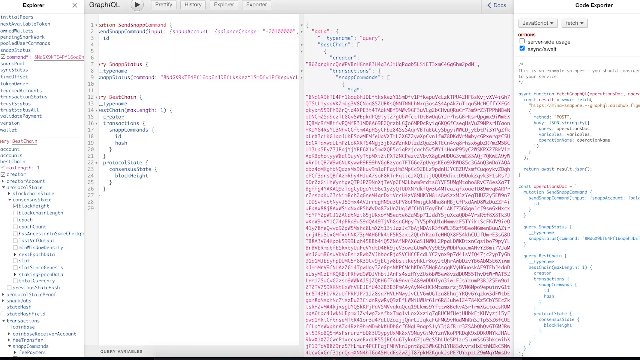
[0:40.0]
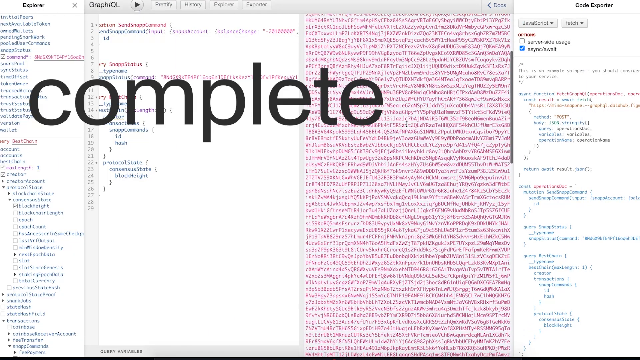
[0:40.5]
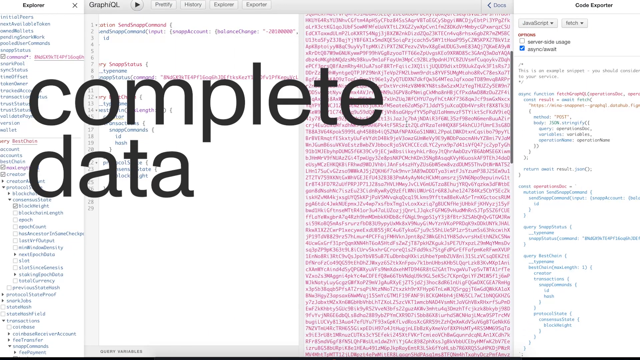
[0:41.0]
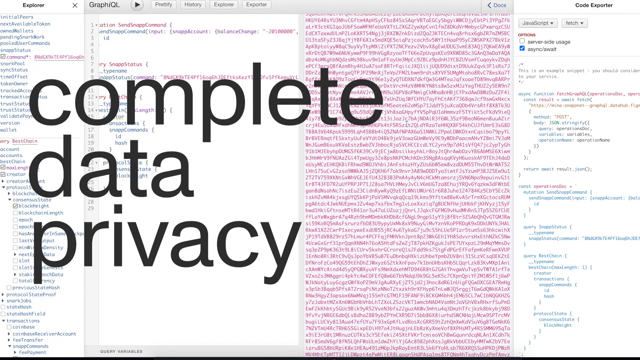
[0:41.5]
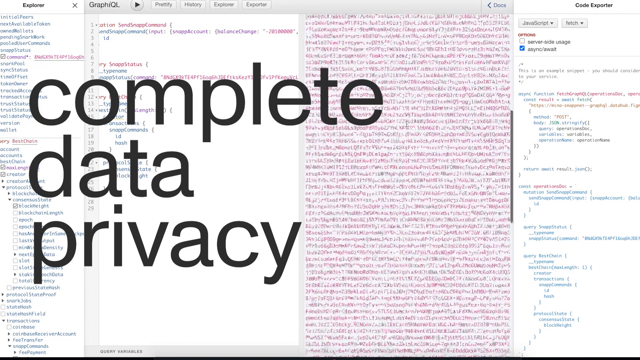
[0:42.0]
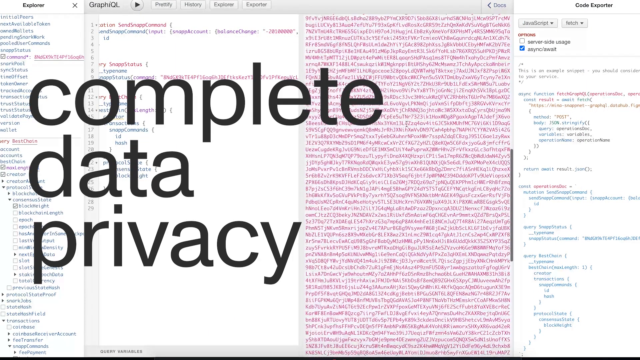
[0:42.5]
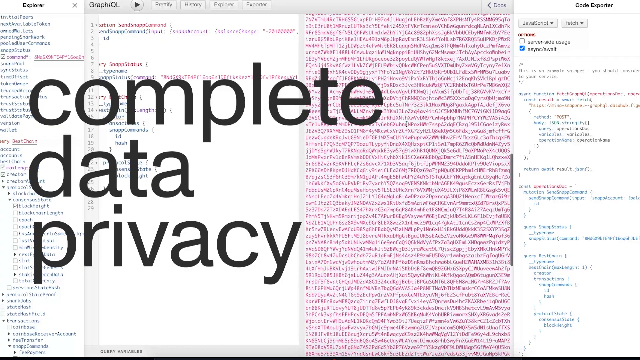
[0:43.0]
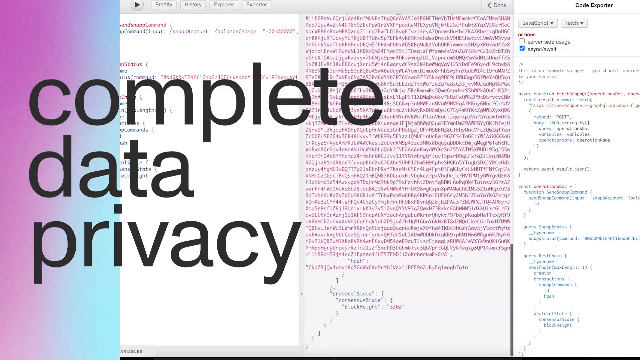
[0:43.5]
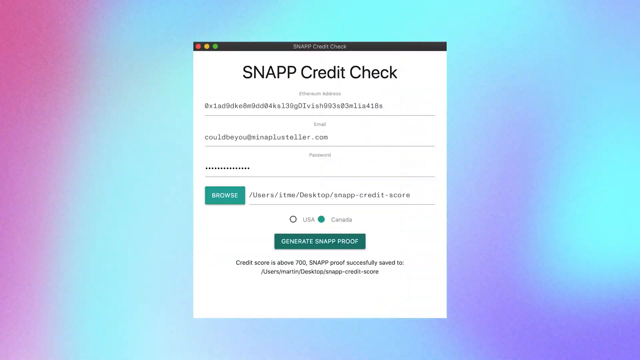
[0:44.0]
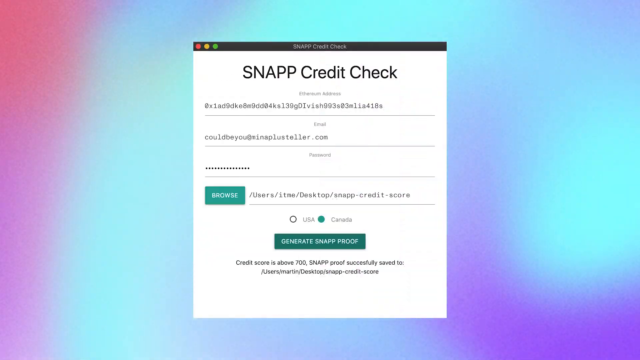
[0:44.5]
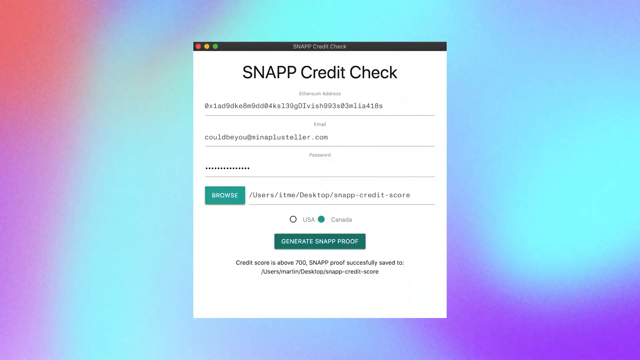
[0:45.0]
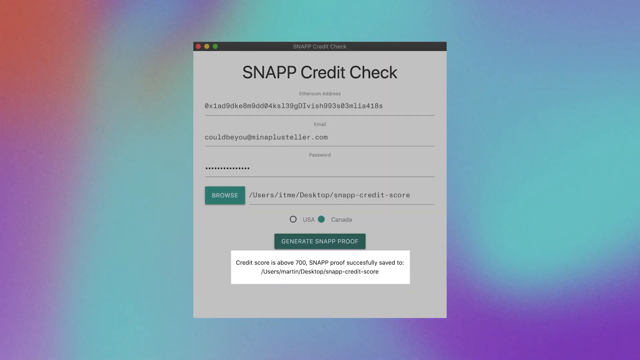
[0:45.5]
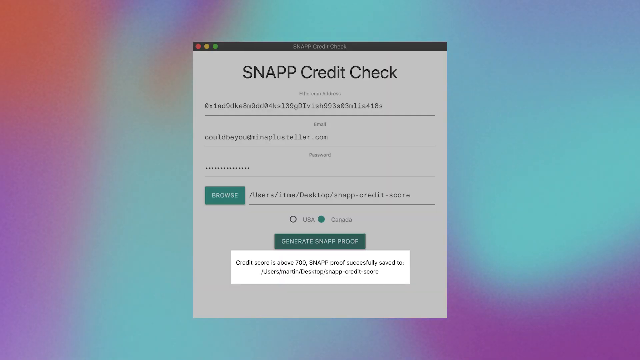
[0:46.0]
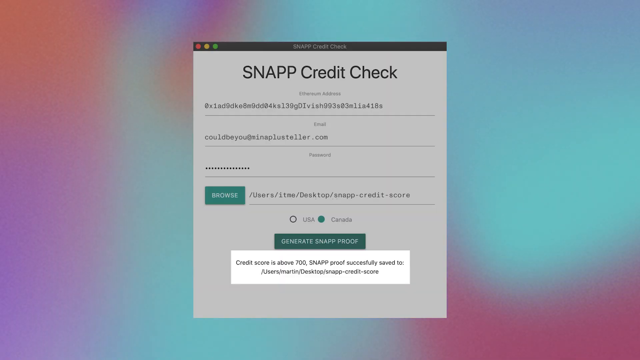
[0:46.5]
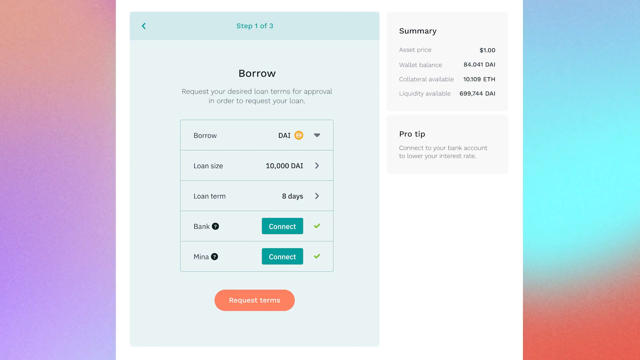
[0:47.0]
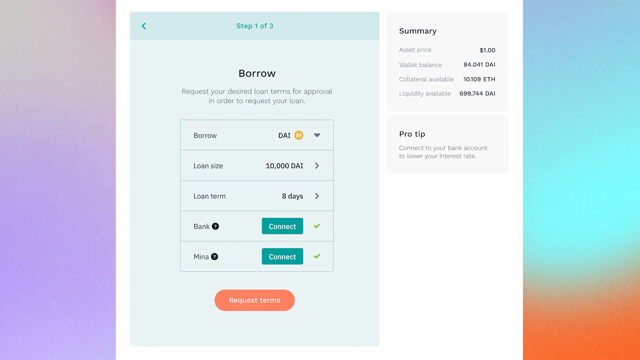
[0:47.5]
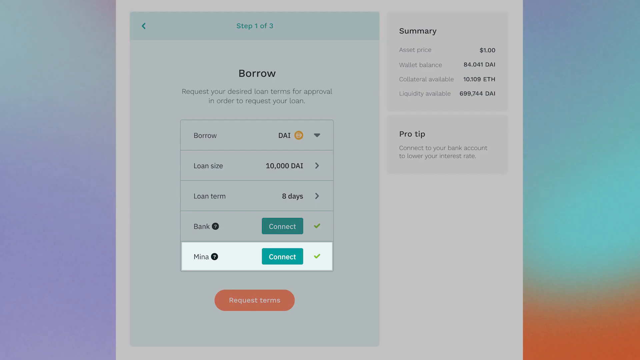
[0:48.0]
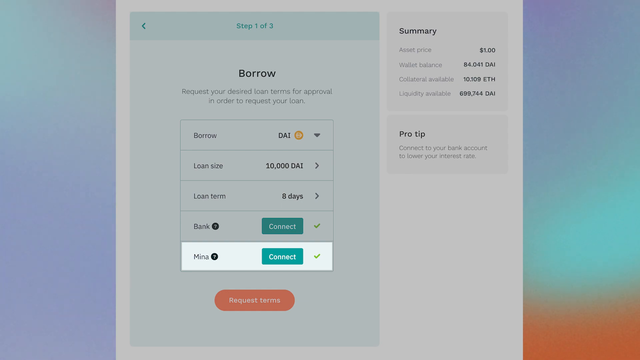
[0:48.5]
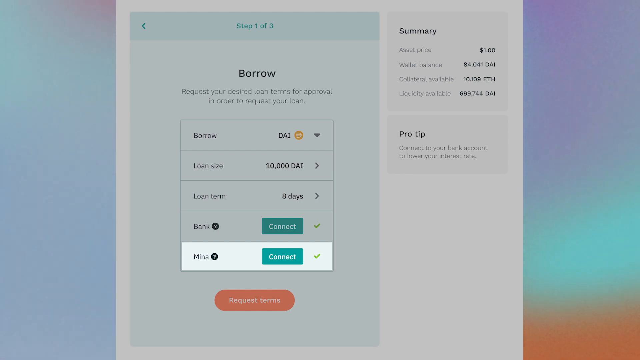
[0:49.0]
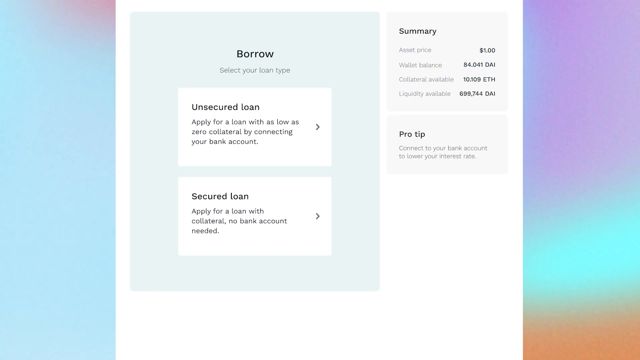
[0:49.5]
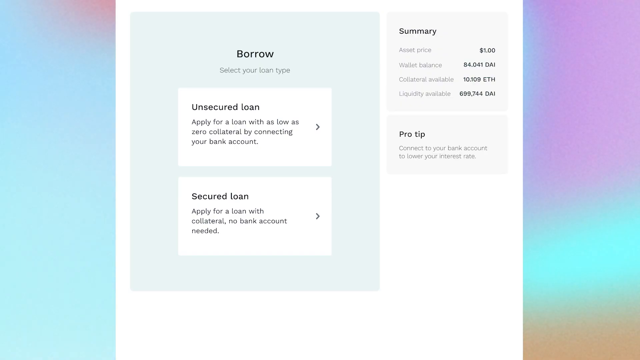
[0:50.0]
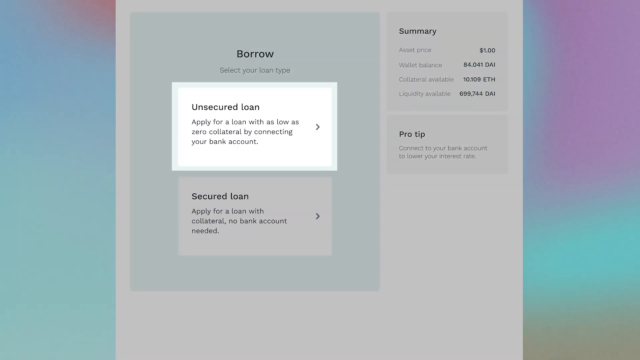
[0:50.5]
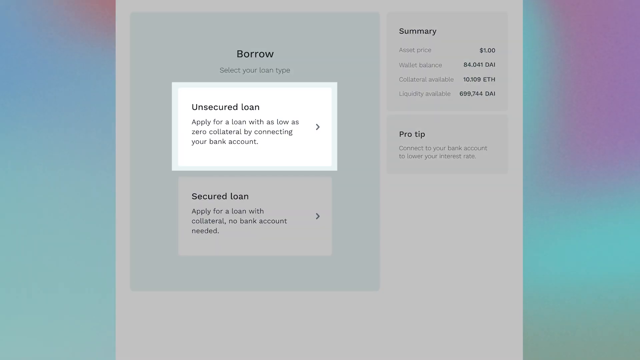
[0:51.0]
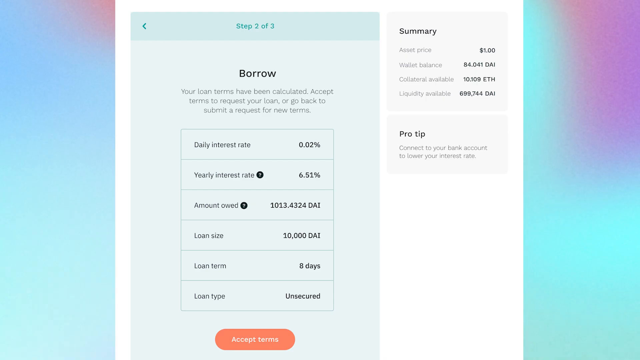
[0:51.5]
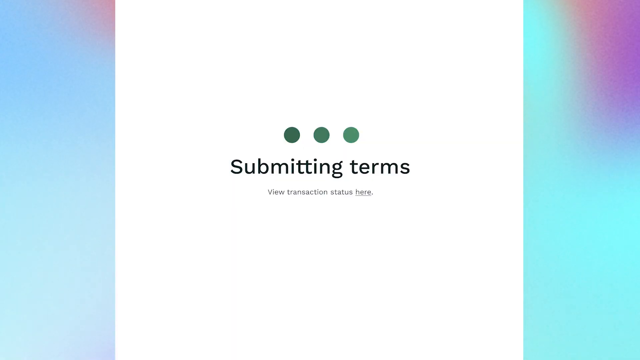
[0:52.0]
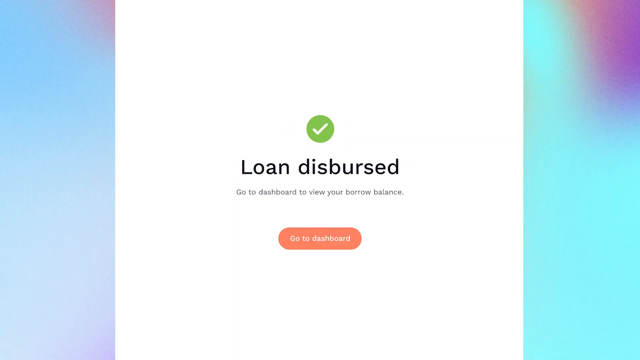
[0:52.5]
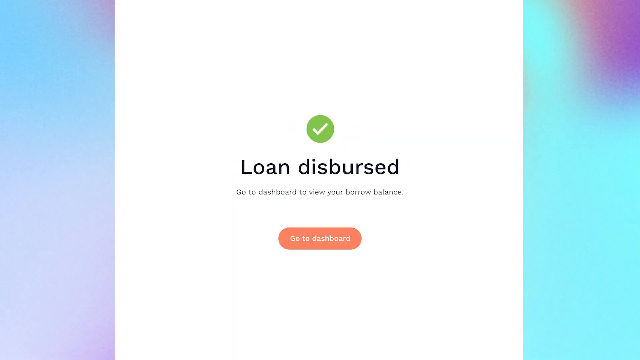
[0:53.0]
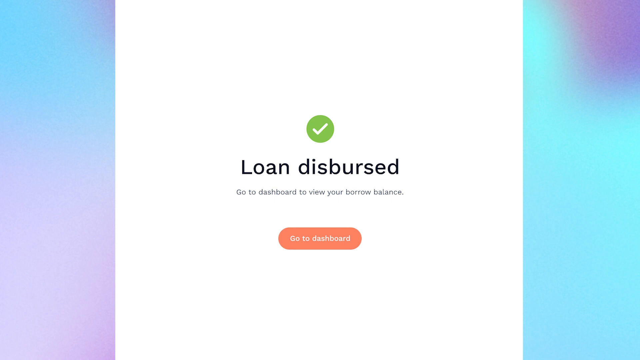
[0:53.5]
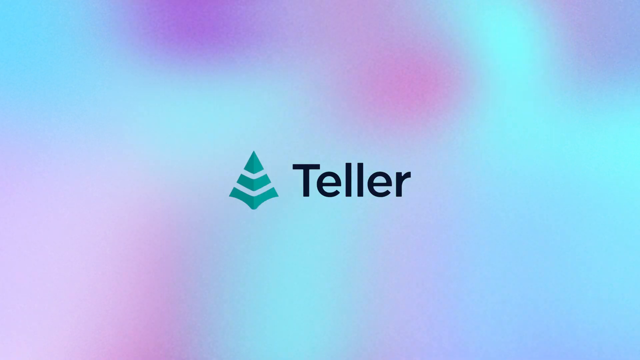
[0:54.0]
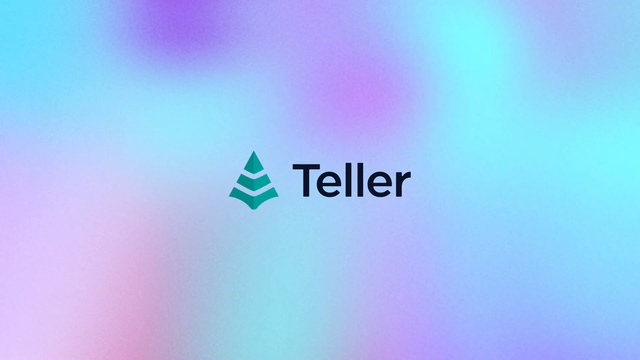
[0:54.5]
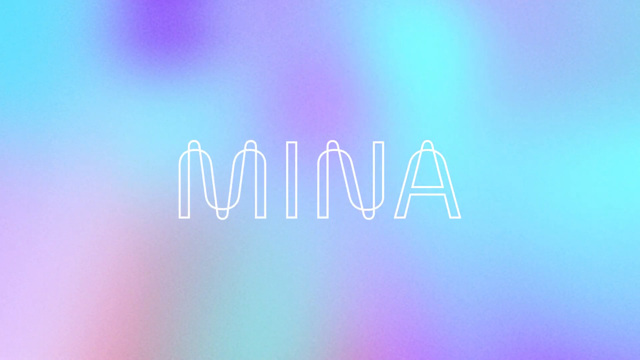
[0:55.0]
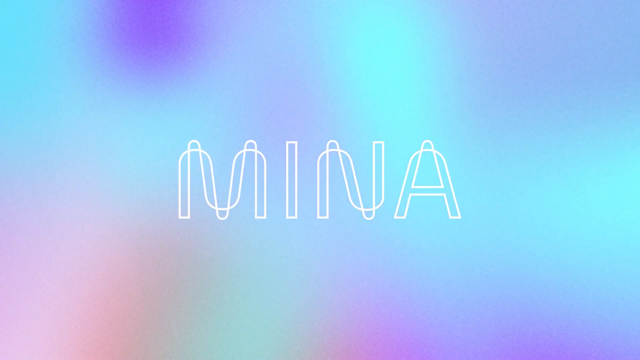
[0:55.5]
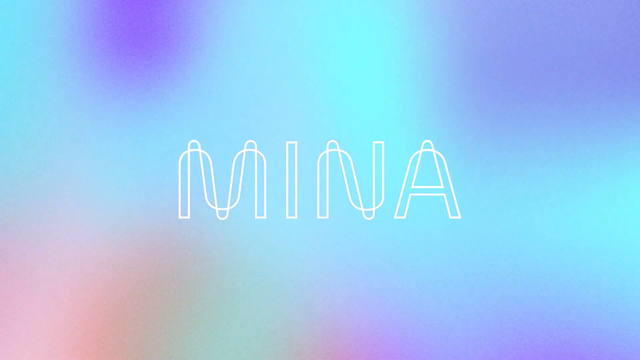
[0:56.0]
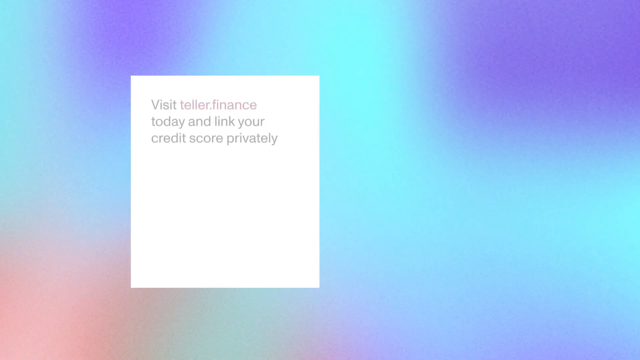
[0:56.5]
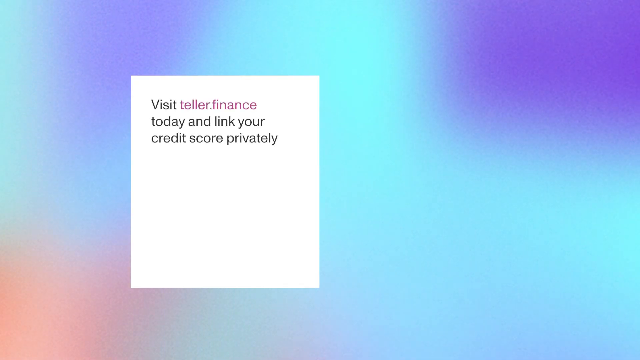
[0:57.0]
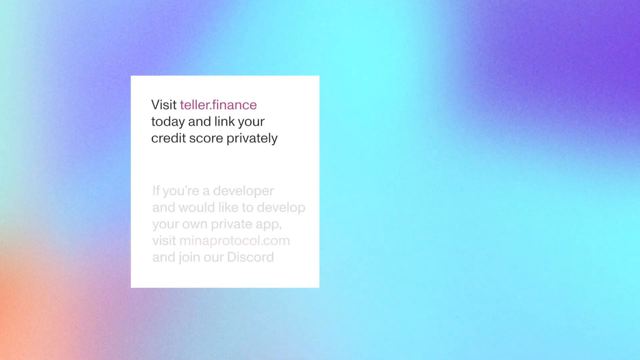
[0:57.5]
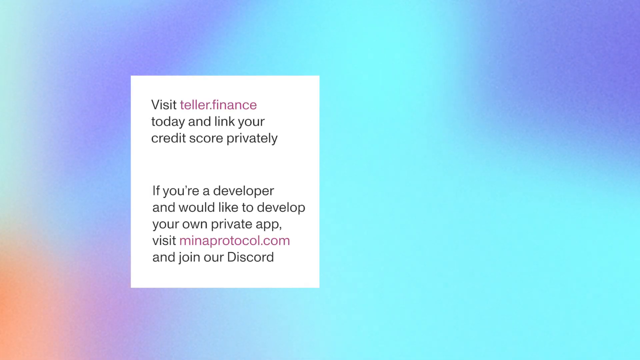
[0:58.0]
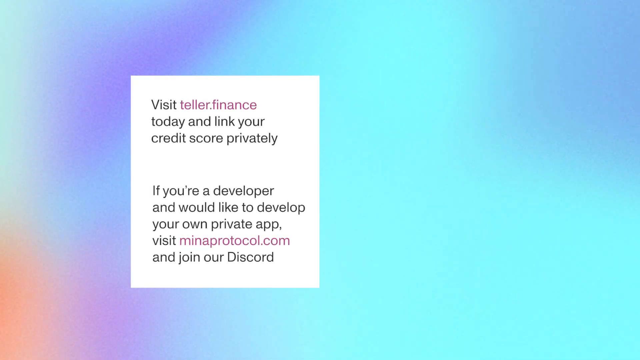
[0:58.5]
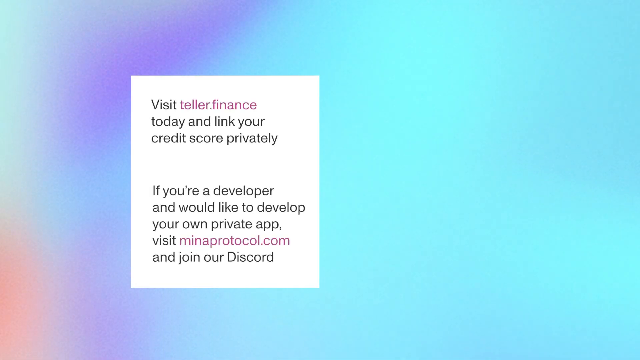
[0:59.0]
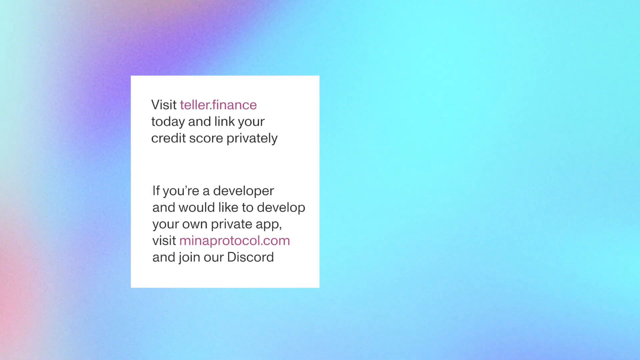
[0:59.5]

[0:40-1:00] A desktop screen shows lots of code, which looks like the back end of a web page or an application page. The page is divided into four vertical panes; the second and fourth look like nested HTML or XML code, and the third pane has all red code from top to bottom. The red code in the third pane scrolls upwards. Three words then pop up on the screen in large black text: "complete data privacy." The third pane is then scrolled downwards. Next, the page transitions to the SNAPP credit check window. The process is completed, and a message that says "Submitting terms" appears, followed by another message that says "Loan disbursed."